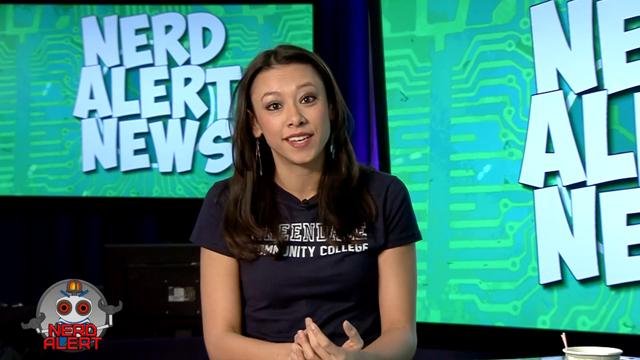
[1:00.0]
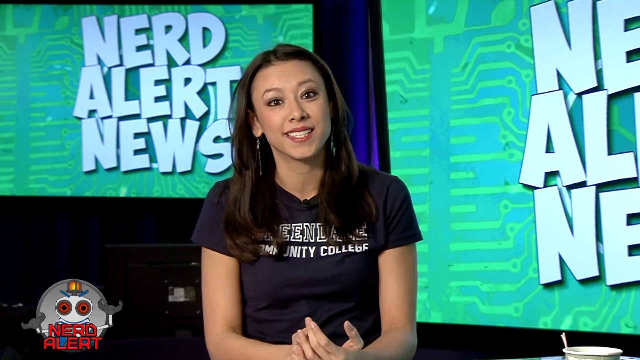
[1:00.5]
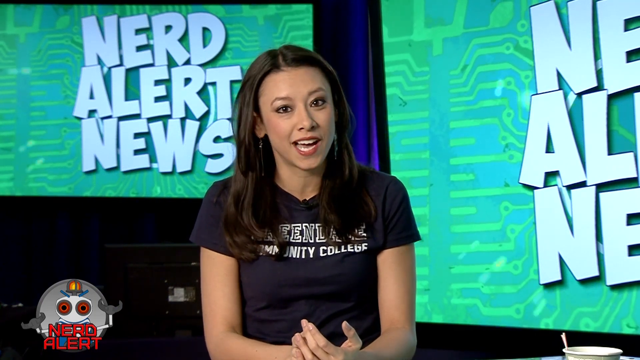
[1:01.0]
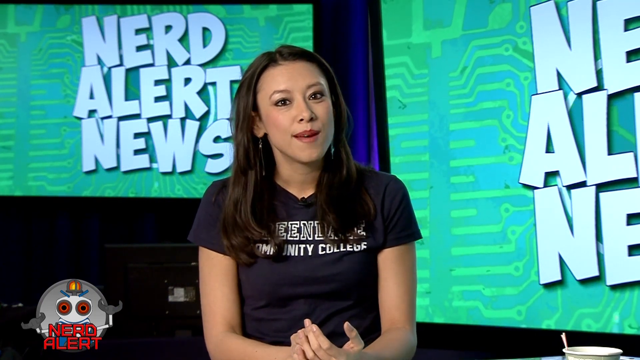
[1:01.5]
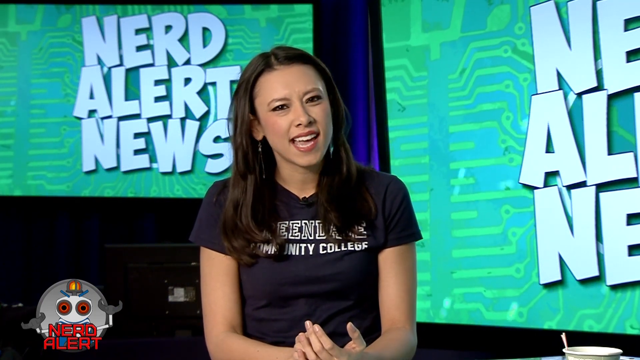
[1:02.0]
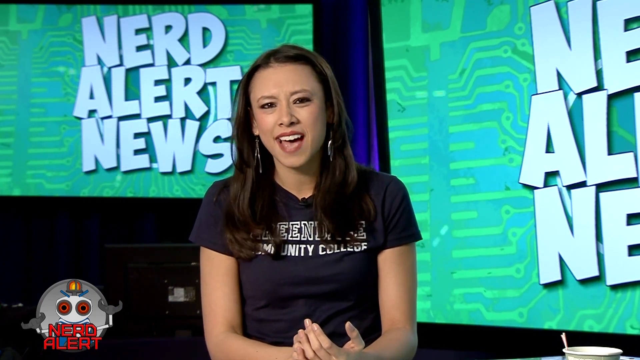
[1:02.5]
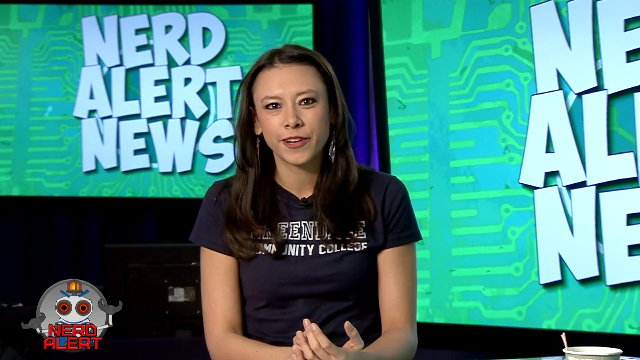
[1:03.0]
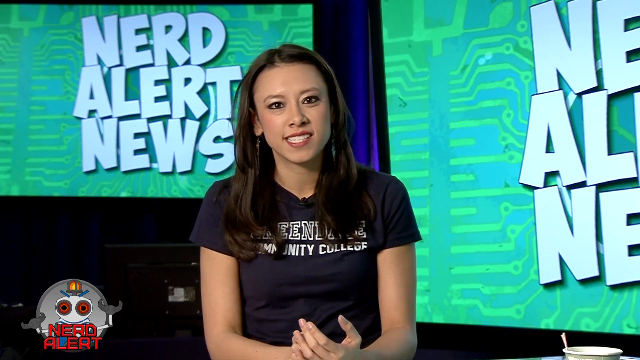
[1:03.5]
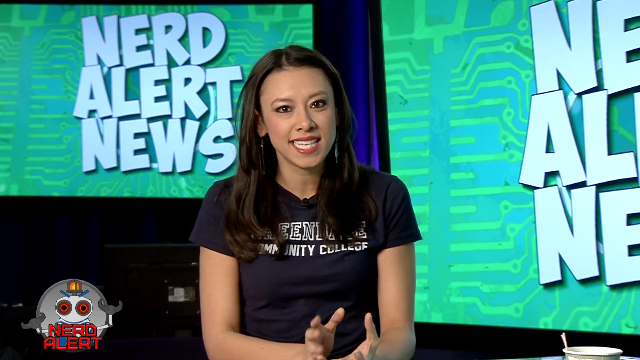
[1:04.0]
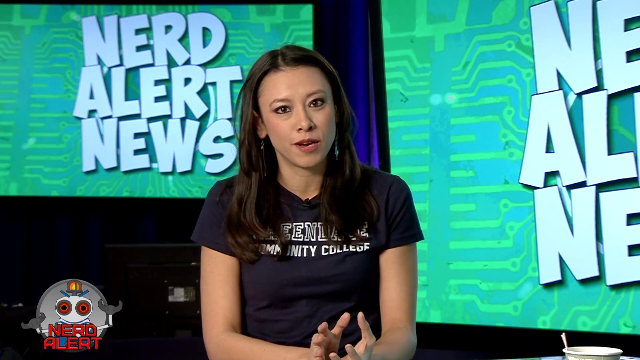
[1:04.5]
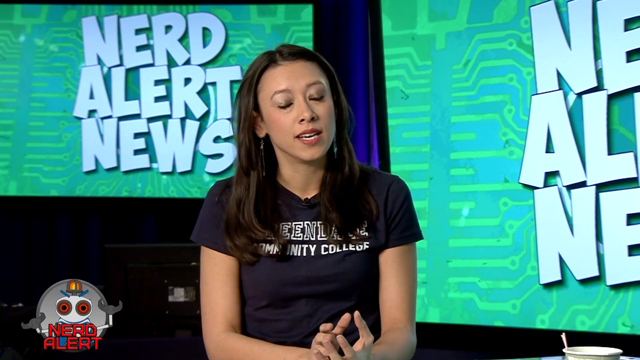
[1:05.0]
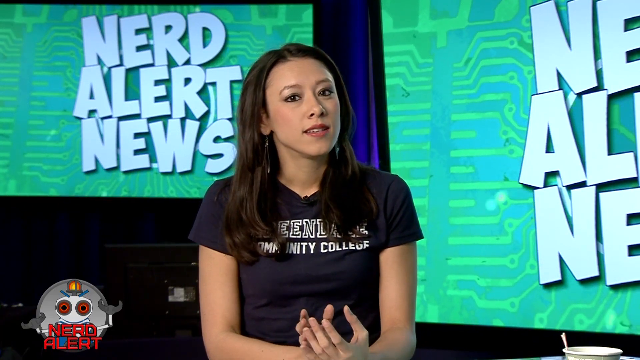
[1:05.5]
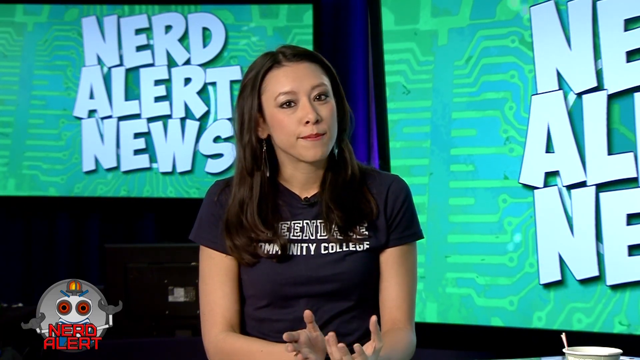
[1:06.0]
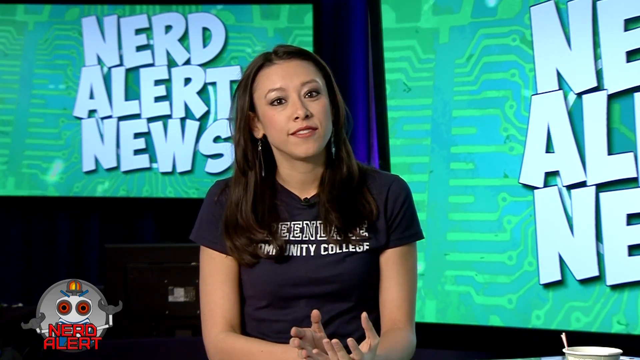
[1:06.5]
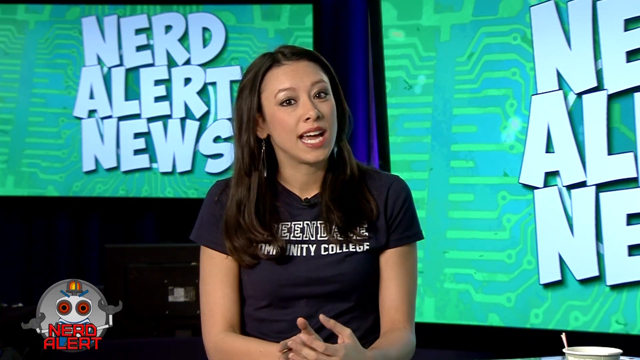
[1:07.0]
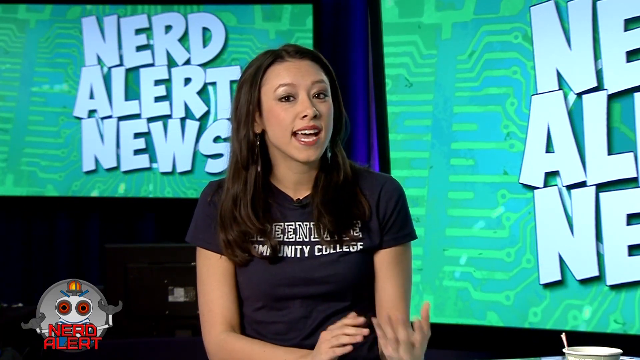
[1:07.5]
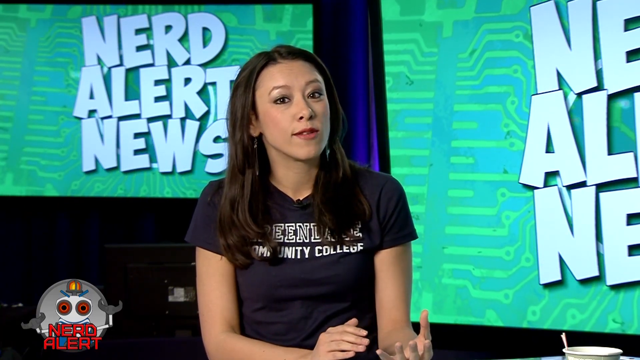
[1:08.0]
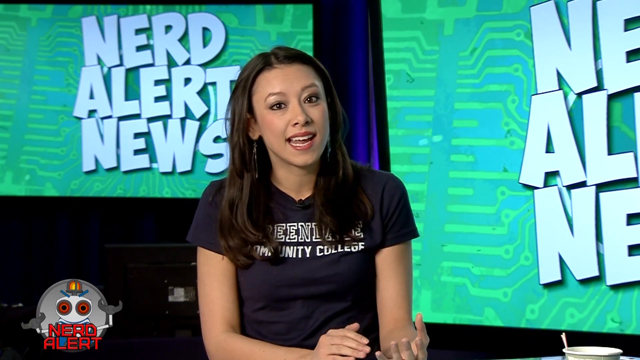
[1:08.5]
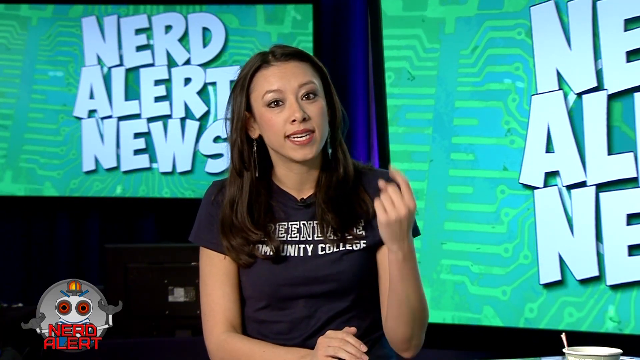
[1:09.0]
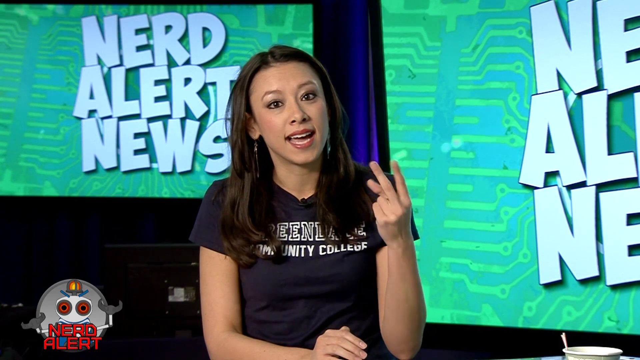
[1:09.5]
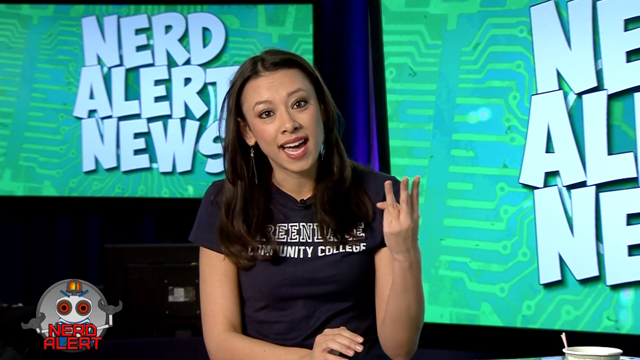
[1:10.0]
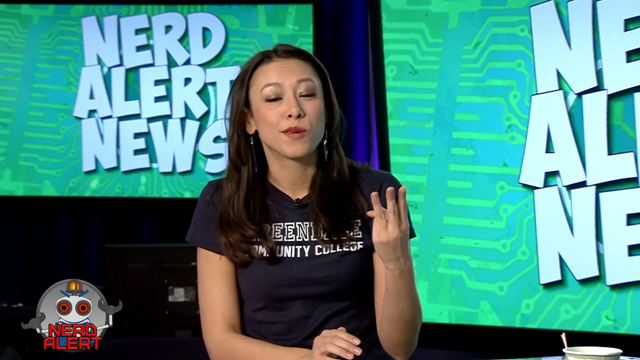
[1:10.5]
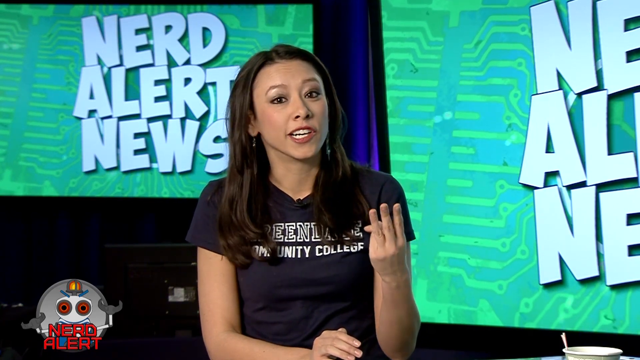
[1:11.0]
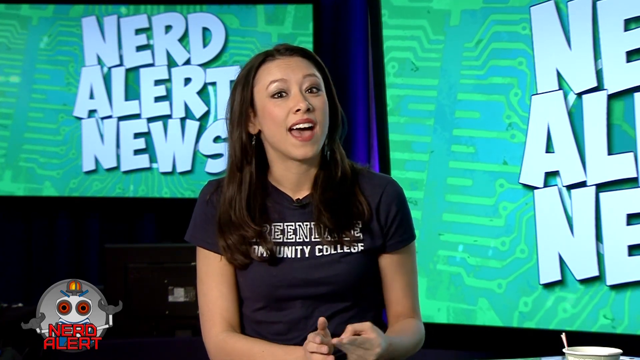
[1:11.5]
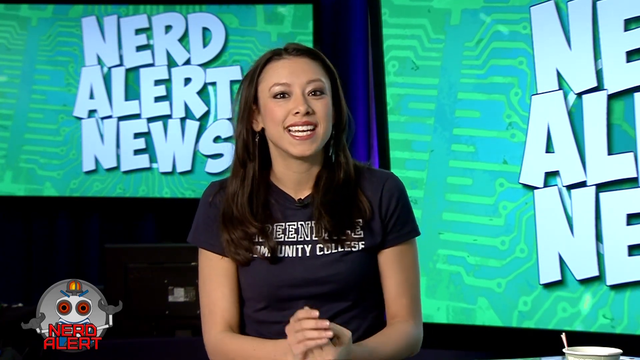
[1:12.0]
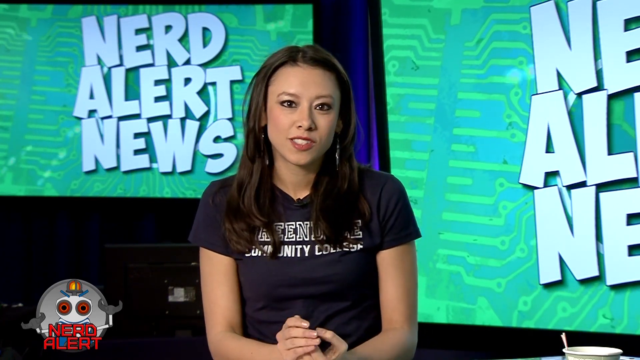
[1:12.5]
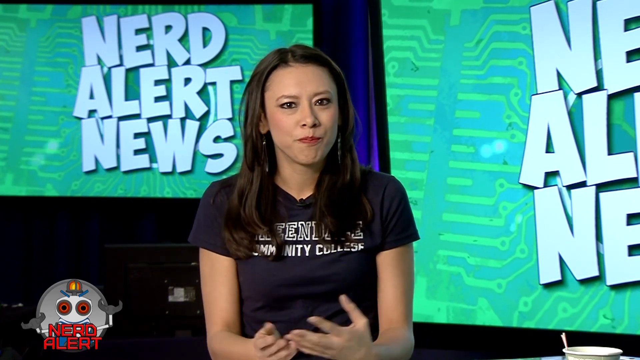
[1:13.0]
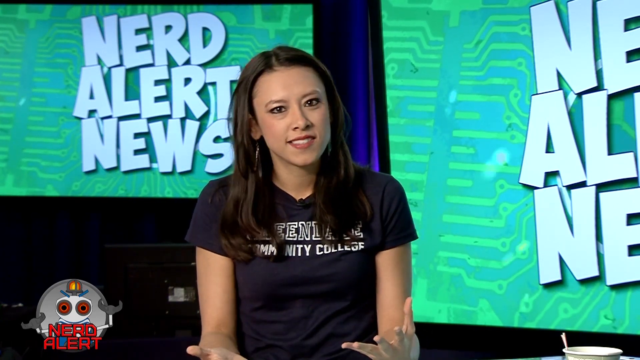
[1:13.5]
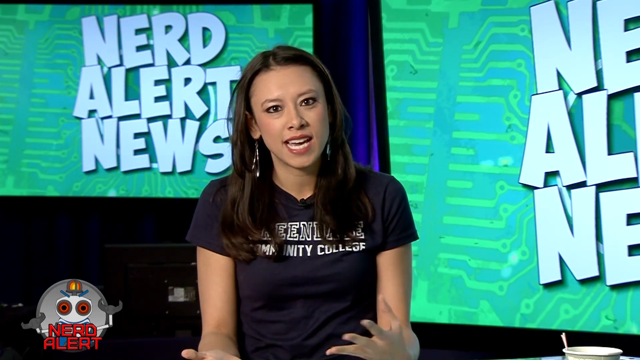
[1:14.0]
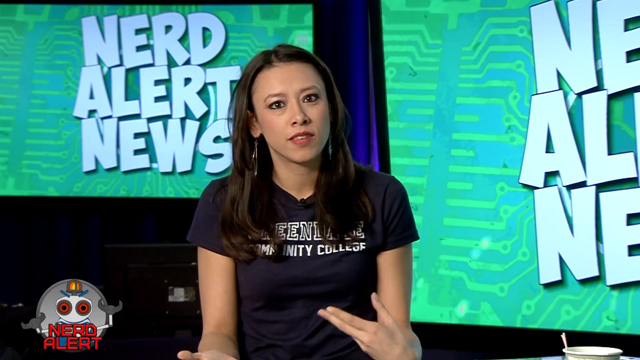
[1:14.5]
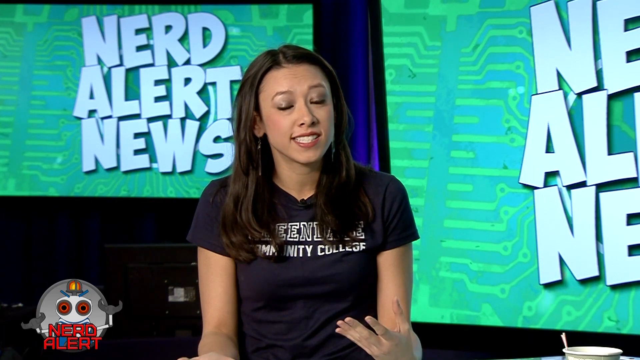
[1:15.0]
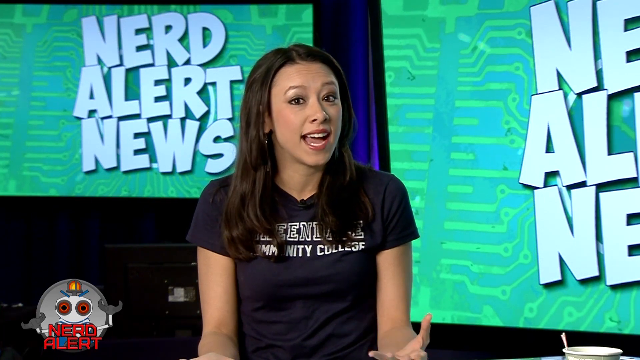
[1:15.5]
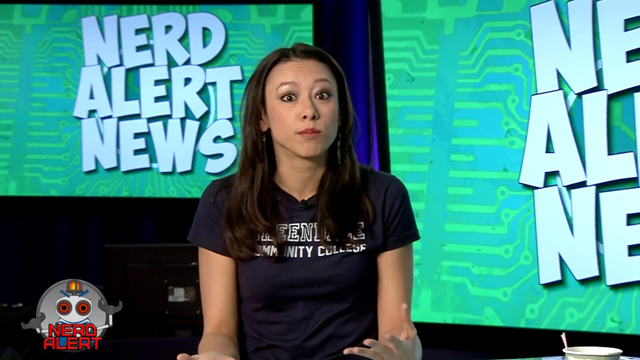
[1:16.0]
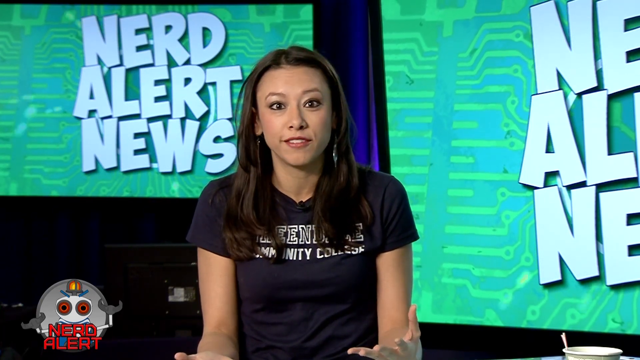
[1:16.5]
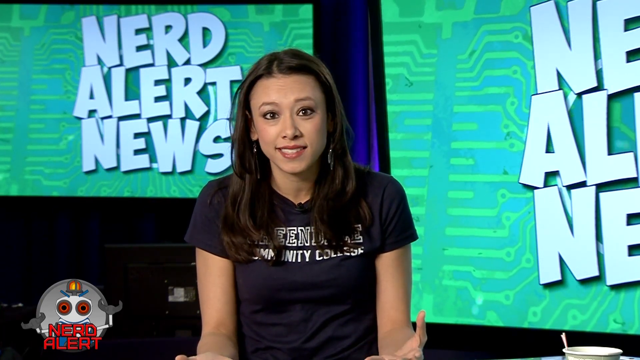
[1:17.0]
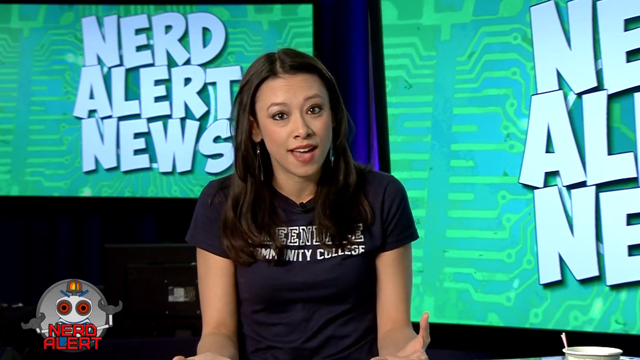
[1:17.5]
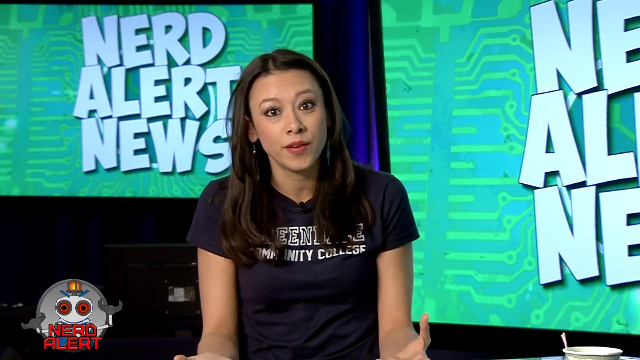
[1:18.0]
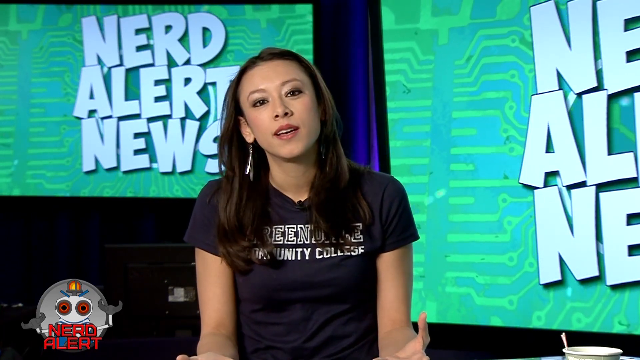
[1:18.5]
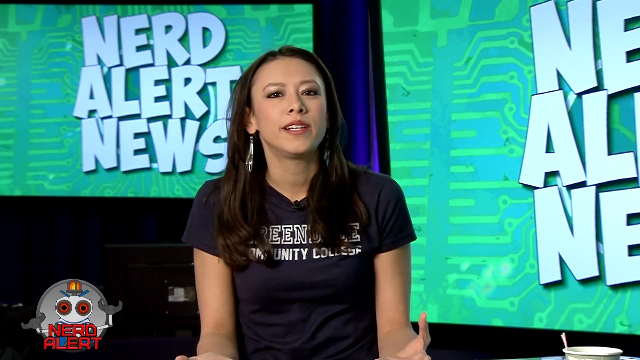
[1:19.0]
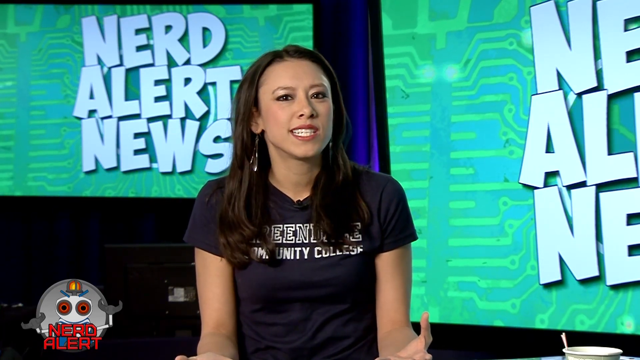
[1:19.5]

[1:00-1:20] The nerd alert news segment features a woman as the news anchor. She has black hair, red lips and pretty eyes, and wears a navy blue shirt, with Perennial Community College shown. Behind her is a screen with a green background showing the words "nerd alert news" in capital letters.